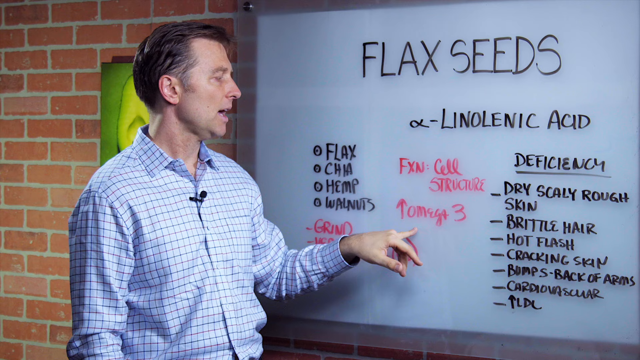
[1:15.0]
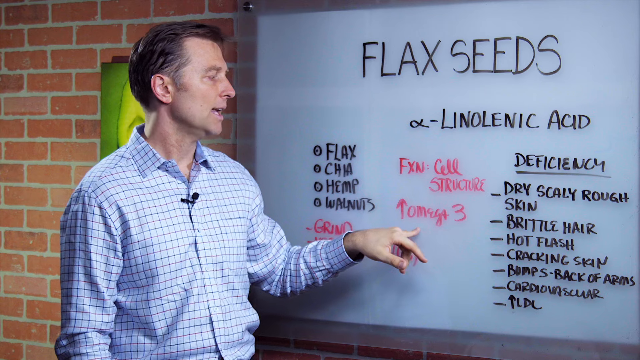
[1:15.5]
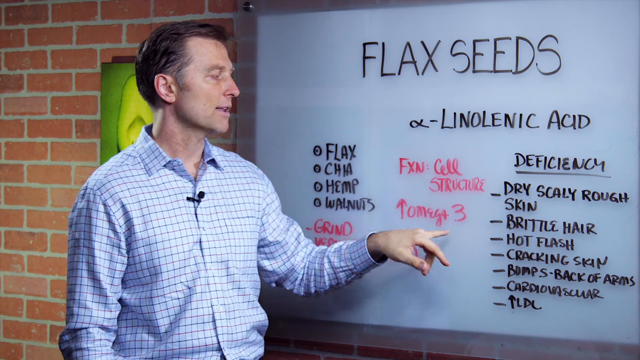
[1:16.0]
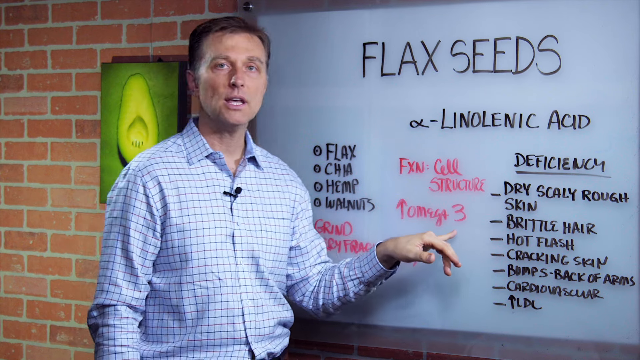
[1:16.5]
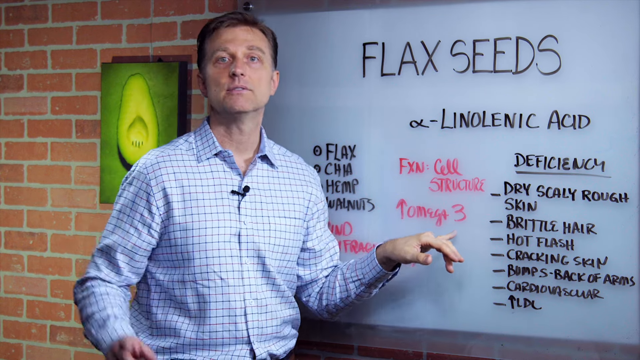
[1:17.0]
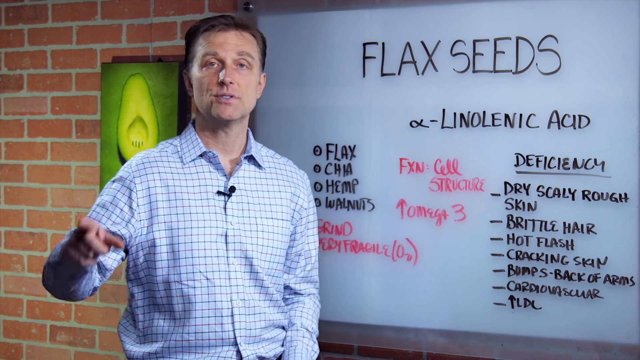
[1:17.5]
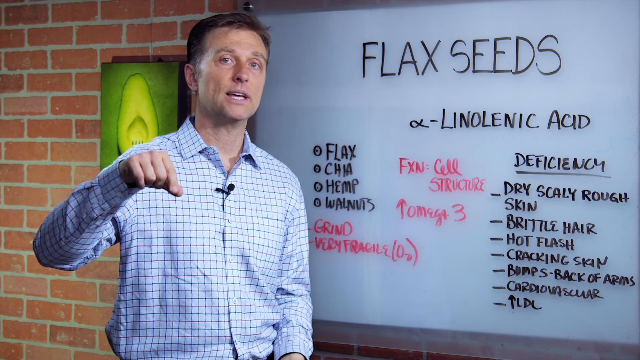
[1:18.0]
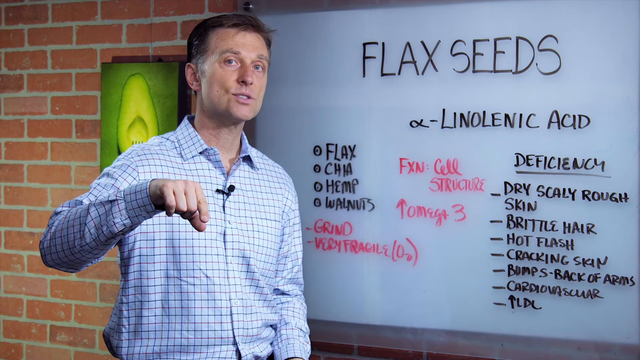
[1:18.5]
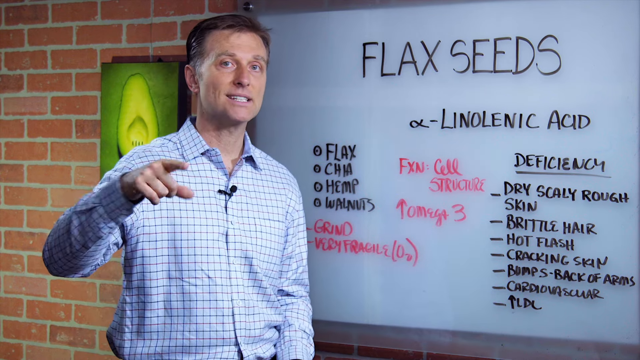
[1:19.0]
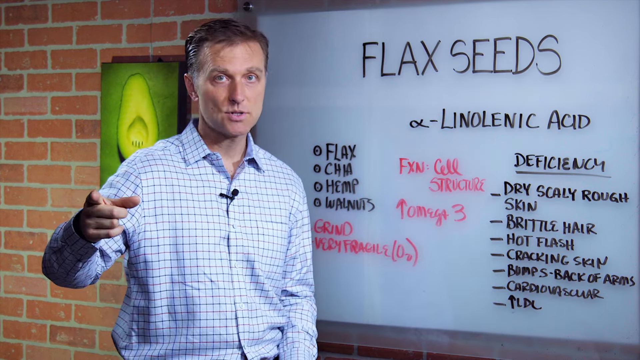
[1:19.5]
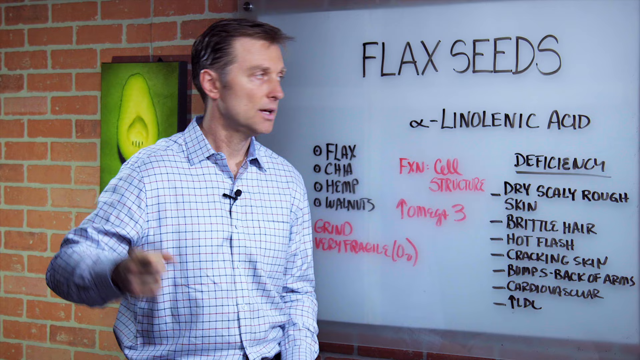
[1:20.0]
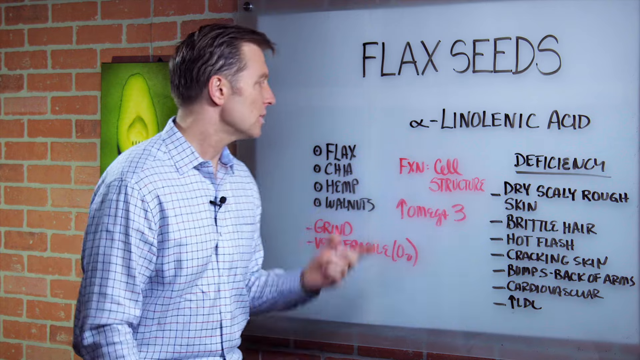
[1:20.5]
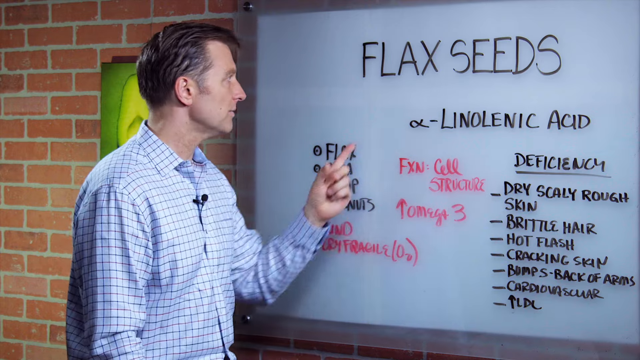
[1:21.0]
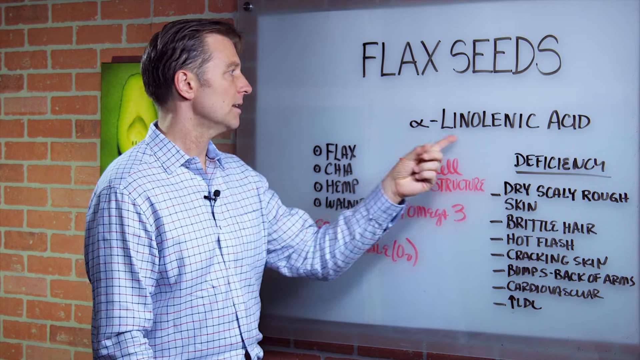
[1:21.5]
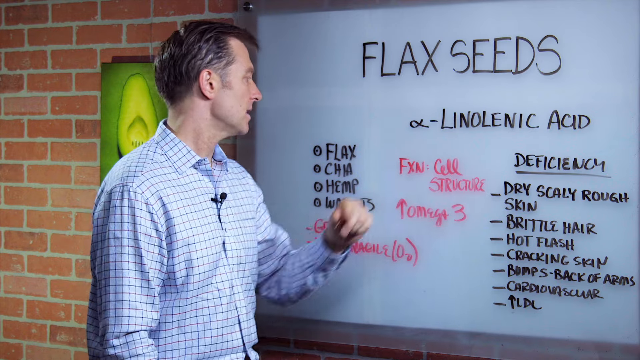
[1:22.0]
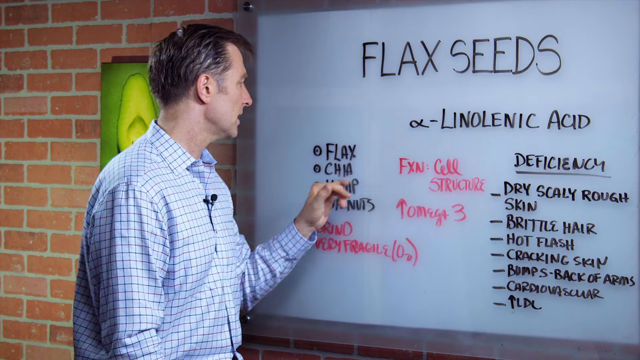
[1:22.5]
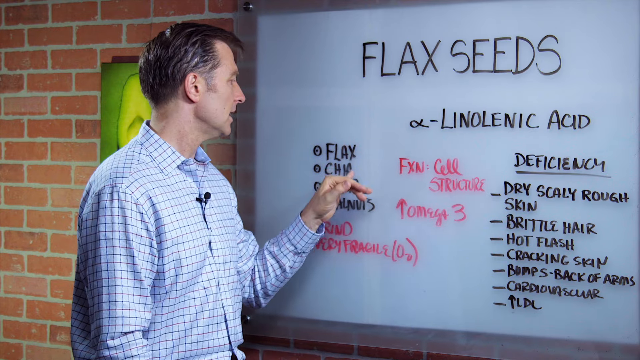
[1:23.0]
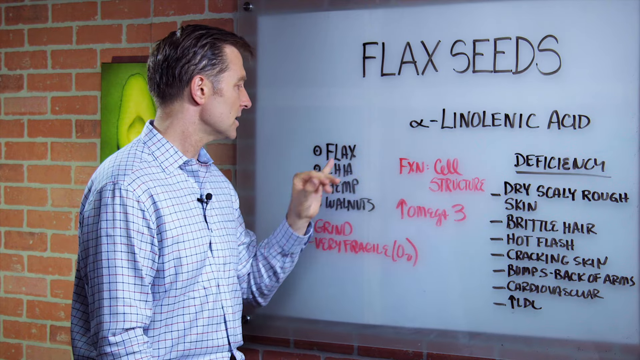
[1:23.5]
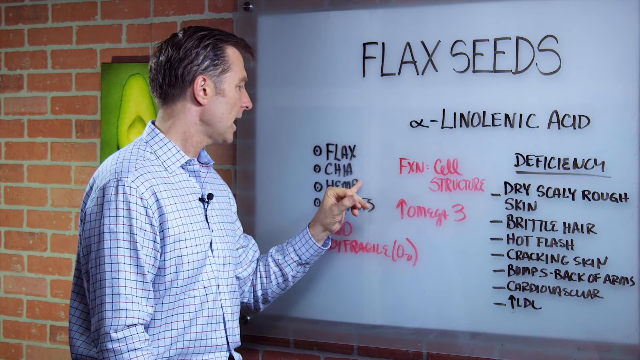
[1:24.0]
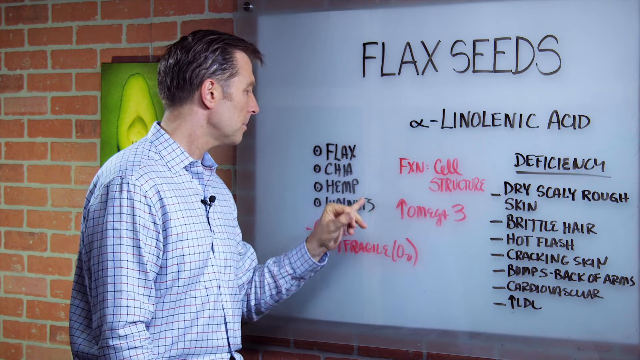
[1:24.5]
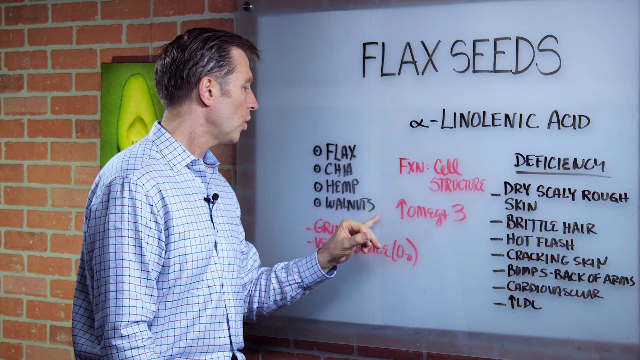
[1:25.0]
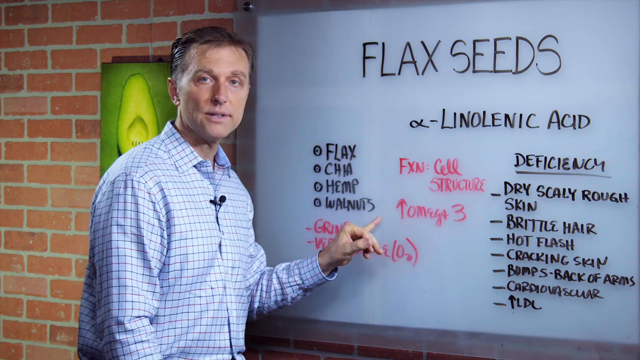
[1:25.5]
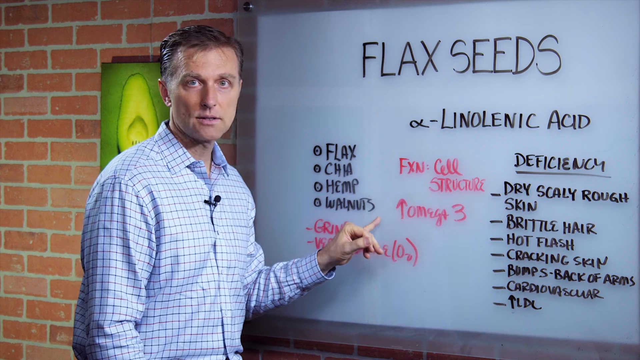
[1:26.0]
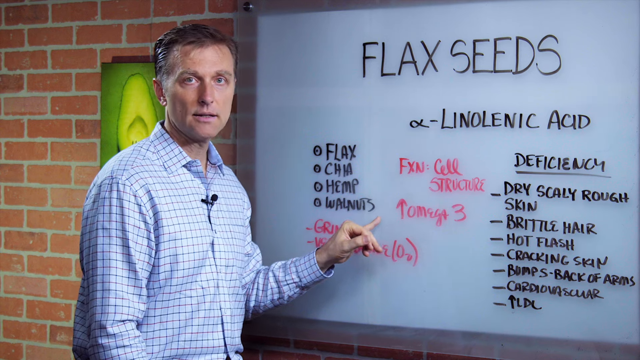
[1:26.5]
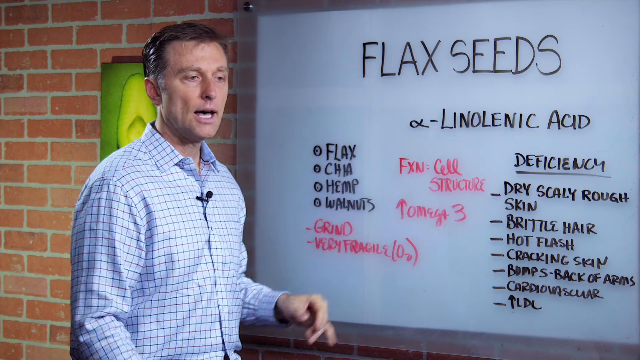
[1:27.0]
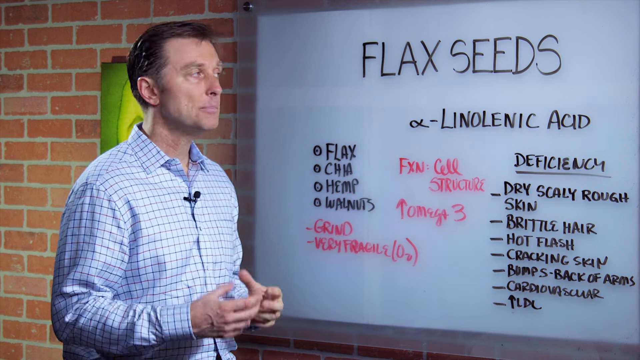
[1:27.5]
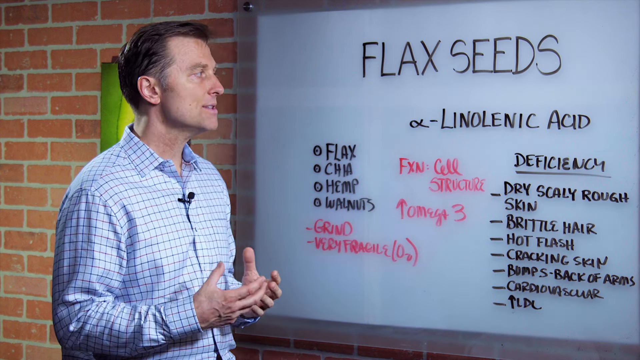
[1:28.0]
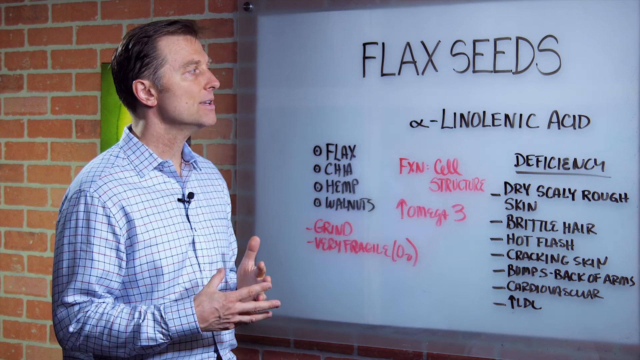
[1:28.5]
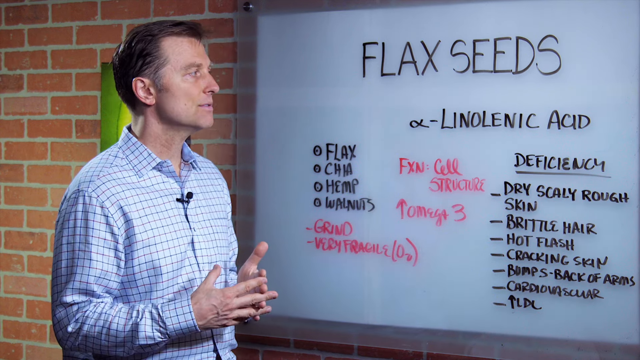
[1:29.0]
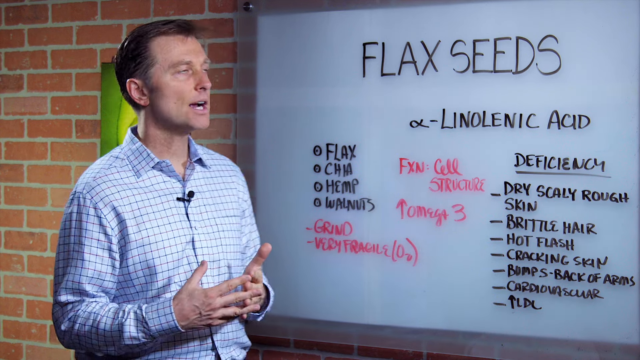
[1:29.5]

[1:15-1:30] A man presents information about flaxseeds. The top of the whiteboard says "flaxseeds" in big letters, with subcategories written underneath in smaller black lettering and also pink lettering. He speaks with his hands, holding them up in the air to make points, then points to words on the whiteboard with his pinky. He wears a blue and white checkered shirt with a black microphone attached, and he is a white man with black hair. He intertwines his fingers in front of his waist, then uses his hands to talk, looks at the whiteboard, looks at his audience, and uses his hands again to make his points. Behind him, a picture of a seed hangs on a red brick wall; the seed, cut in half and like a lime green, has a green background behind it and a round scooped-out part inside.